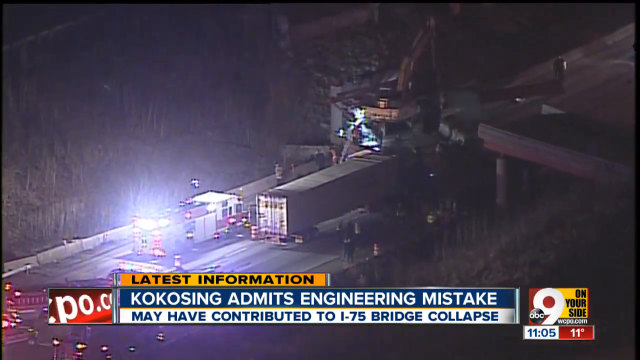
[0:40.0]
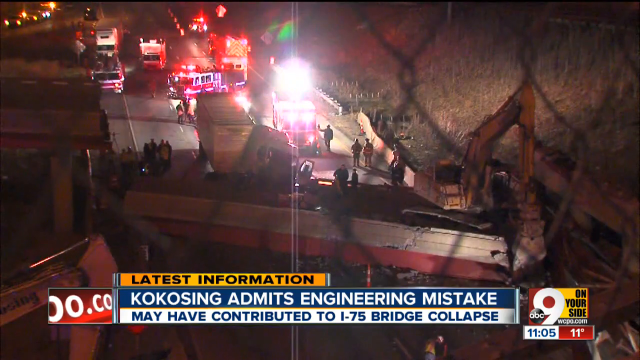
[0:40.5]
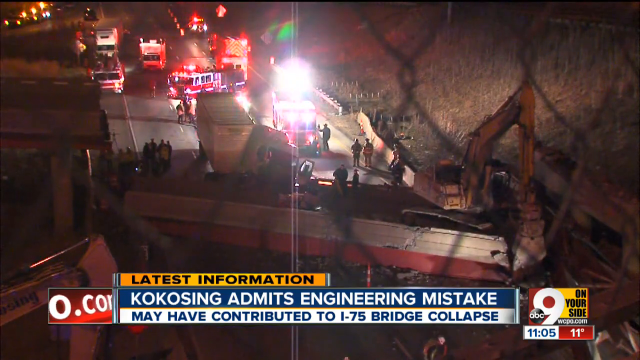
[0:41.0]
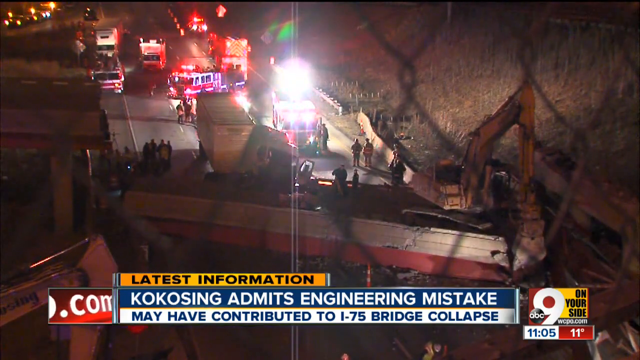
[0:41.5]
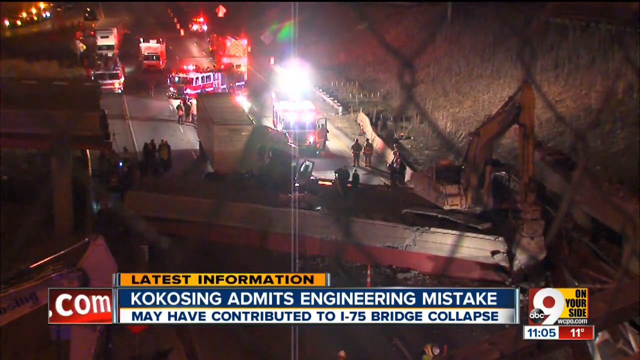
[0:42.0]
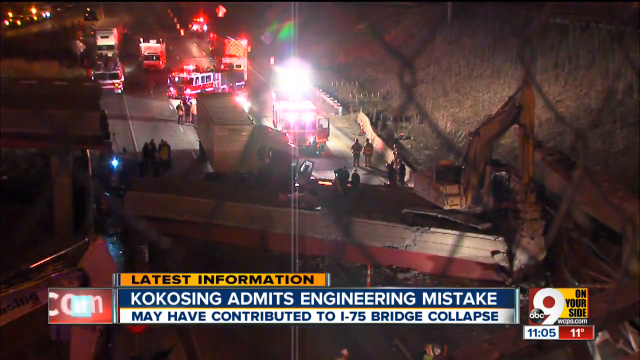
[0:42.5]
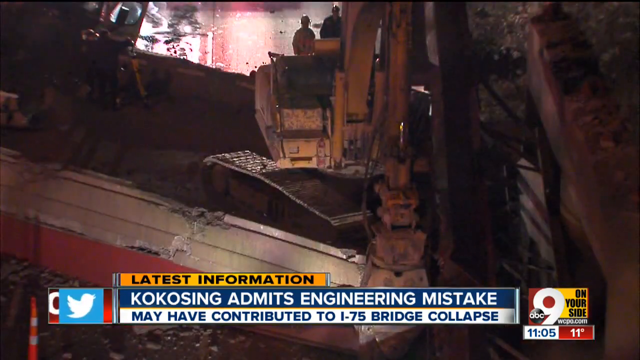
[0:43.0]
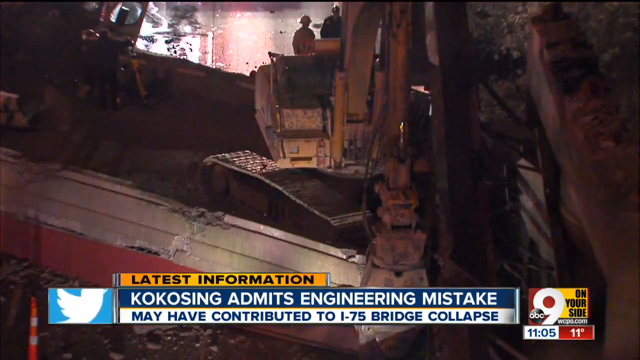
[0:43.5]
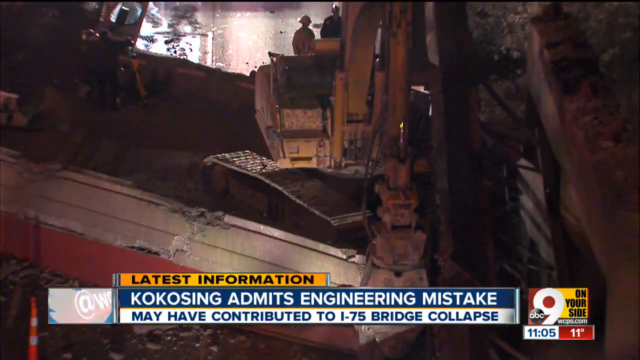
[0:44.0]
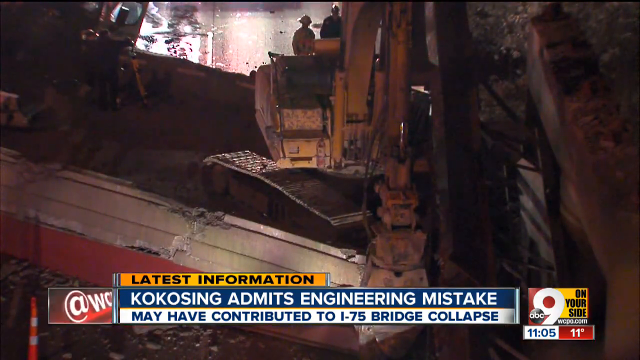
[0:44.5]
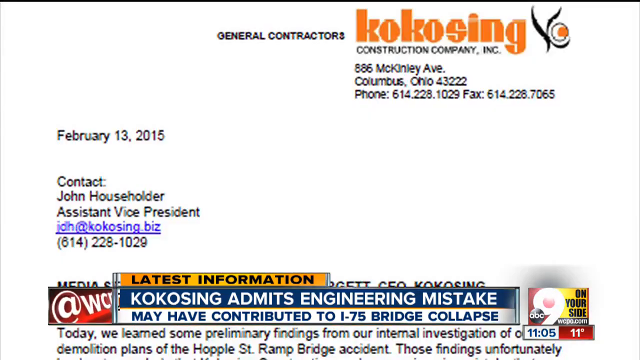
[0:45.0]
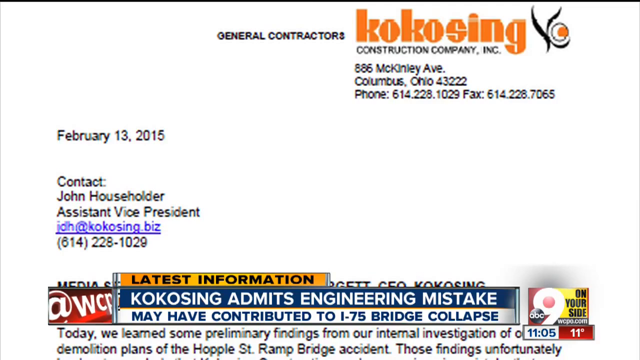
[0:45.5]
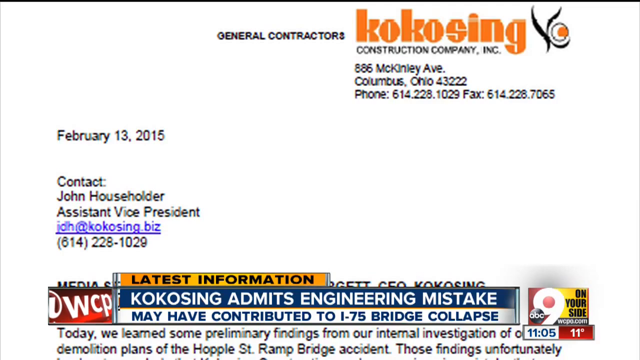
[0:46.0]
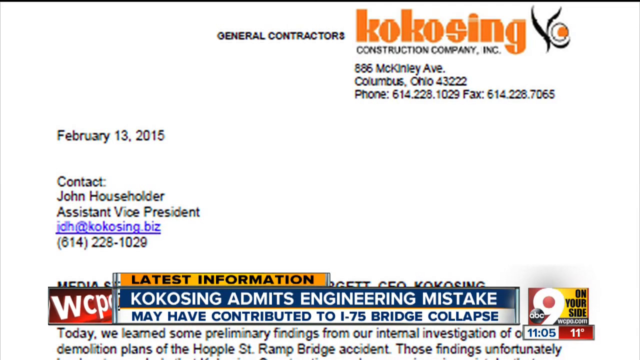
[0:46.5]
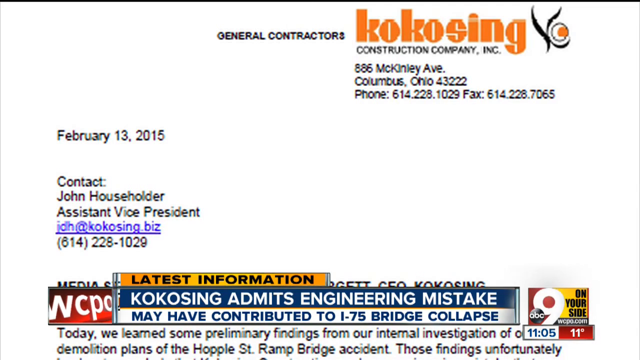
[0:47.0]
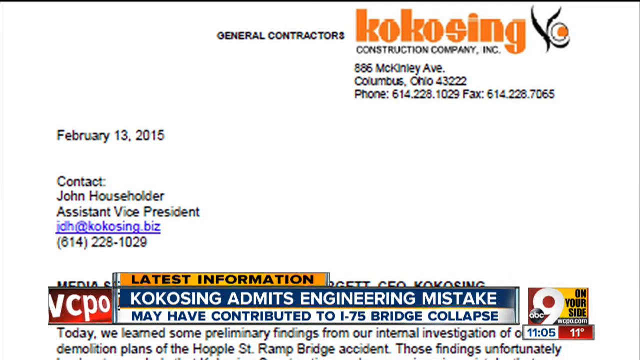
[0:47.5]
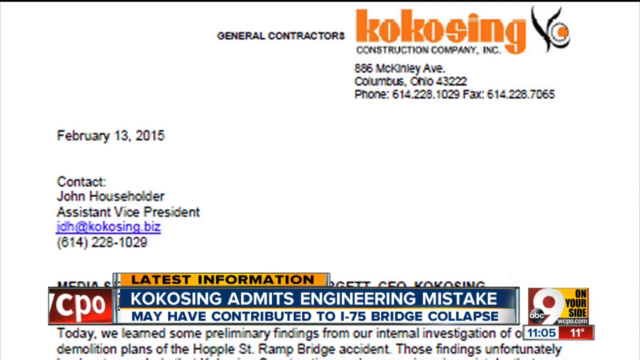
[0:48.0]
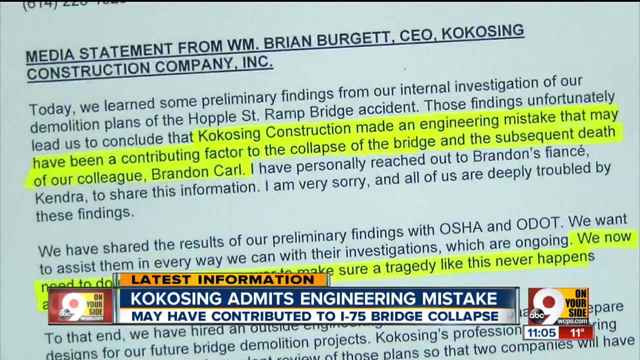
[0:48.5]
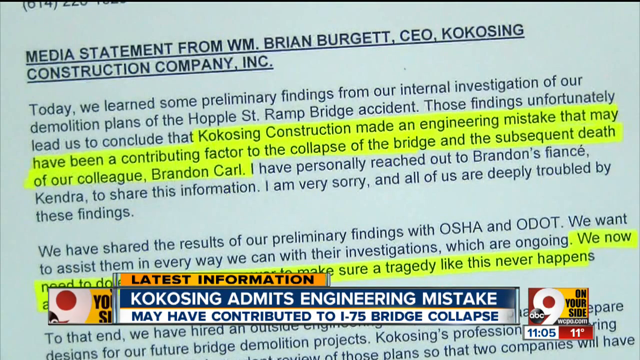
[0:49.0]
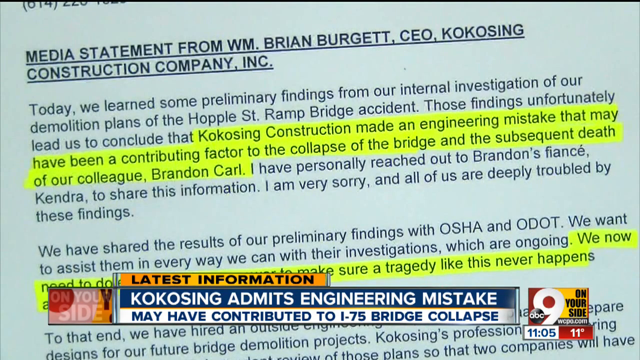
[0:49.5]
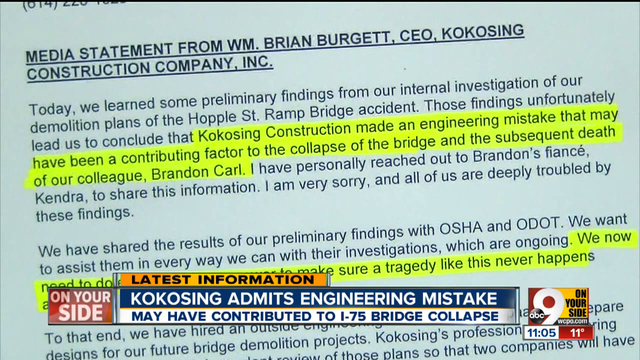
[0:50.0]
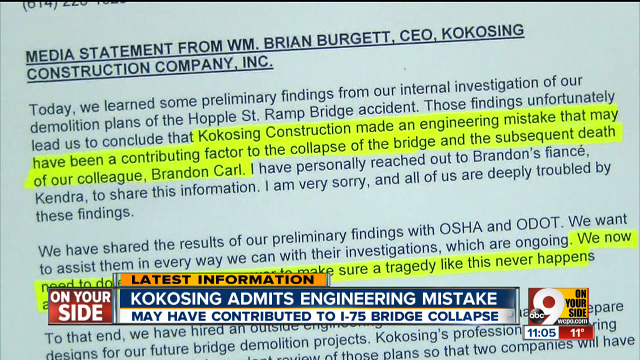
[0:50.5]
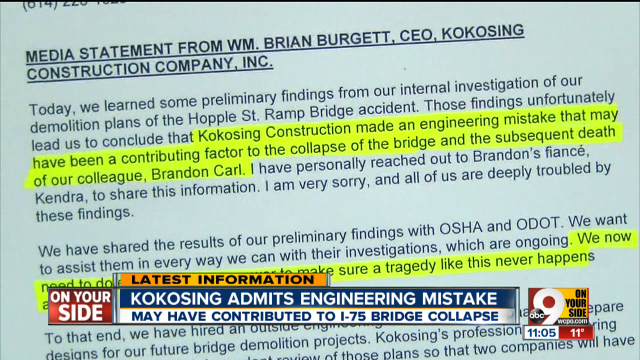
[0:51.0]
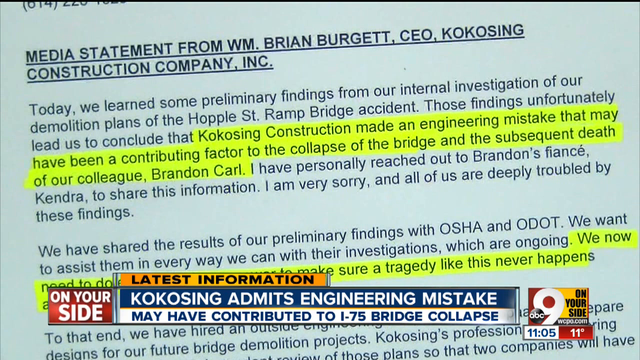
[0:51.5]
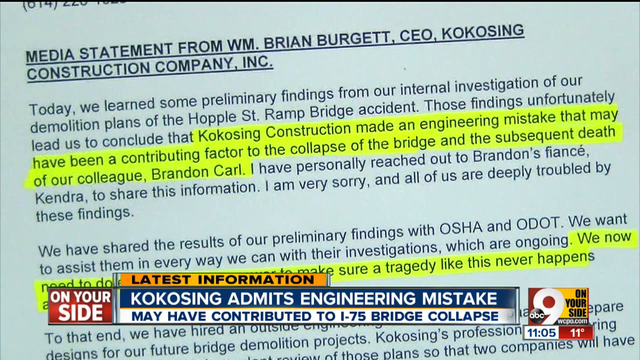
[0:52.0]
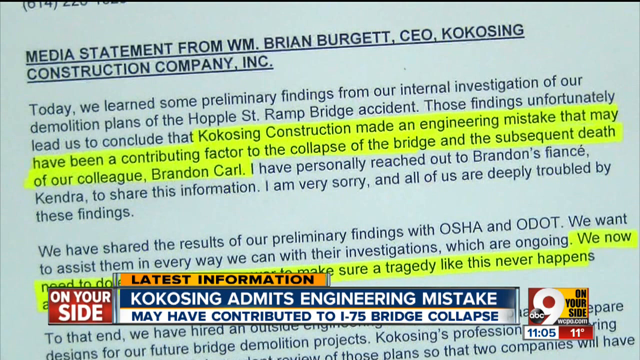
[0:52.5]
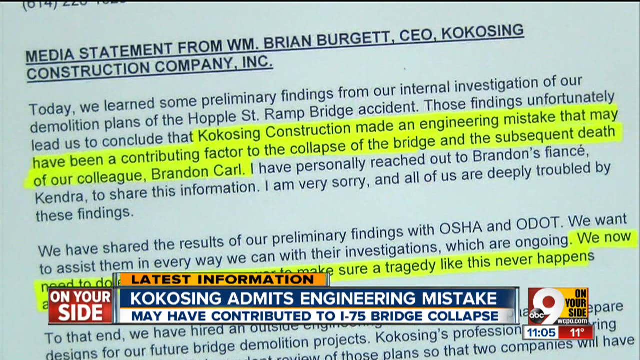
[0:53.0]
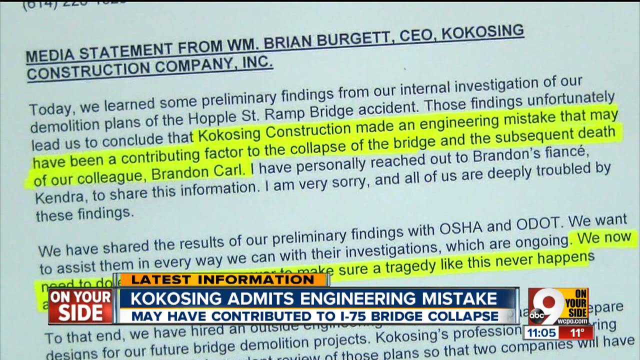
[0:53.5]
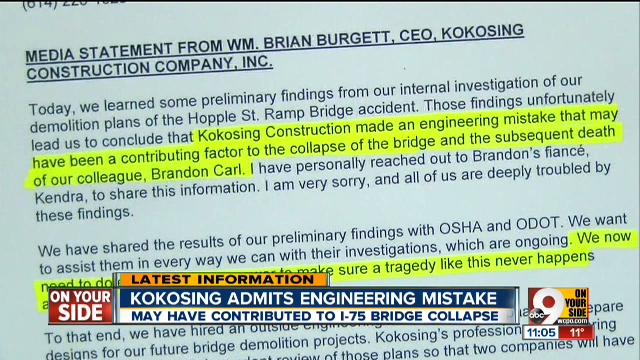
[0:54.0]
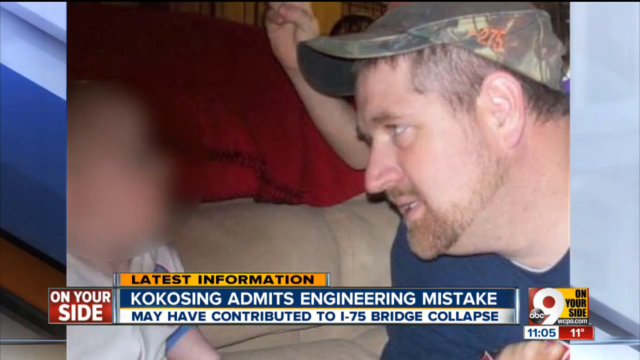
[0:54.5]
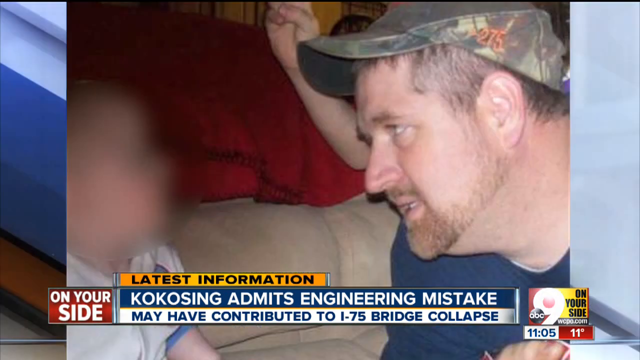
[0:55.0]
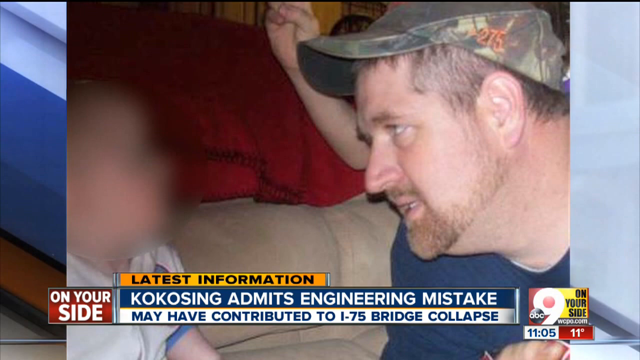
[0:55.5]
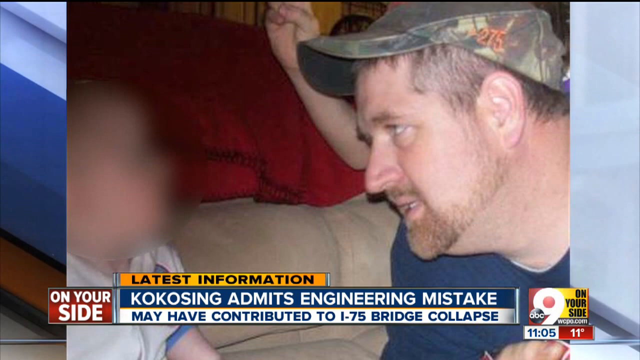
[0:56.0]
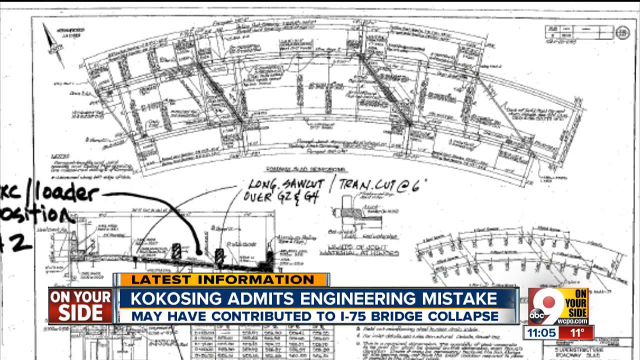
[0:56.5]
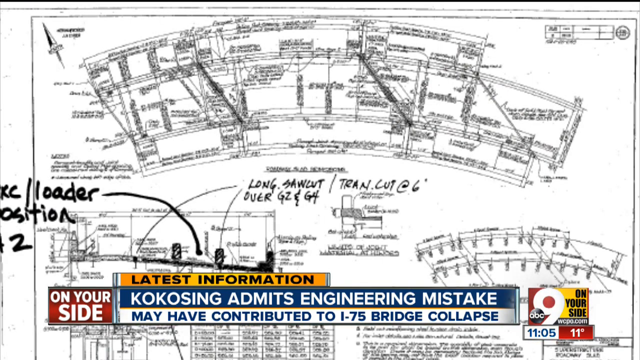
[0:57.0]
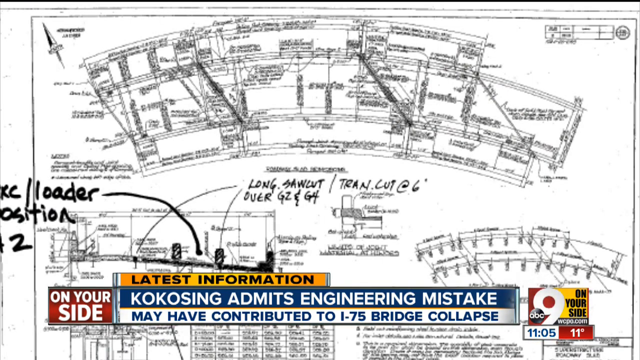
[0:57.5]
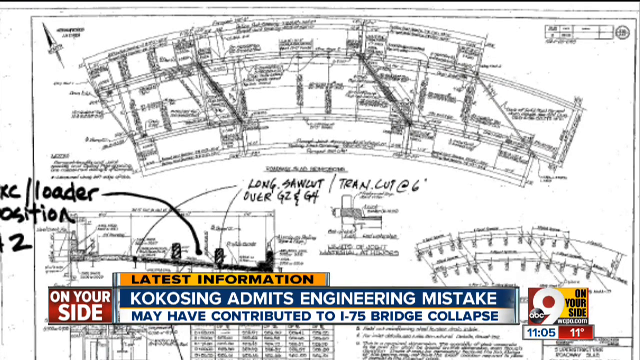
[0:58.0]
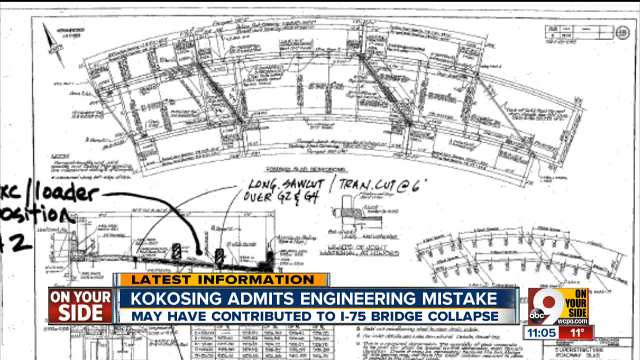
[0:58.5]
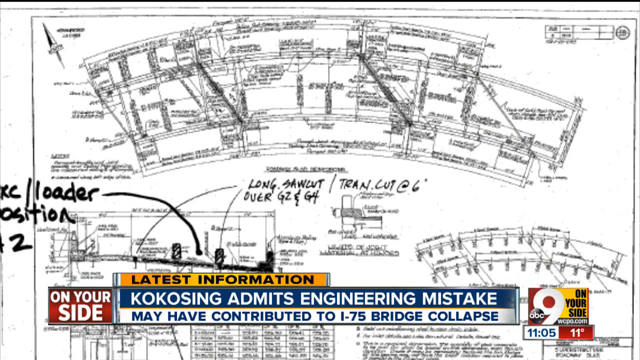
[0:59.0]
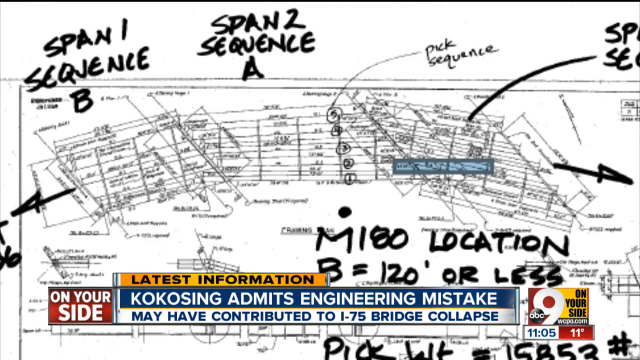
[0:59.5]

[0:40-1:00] Scenes from the accident site show where the bridge collapsed on top of an 18-wheeler. A number of firefighters are in motion, removing debris and wreckage, and they appear to be working very fervently; no police are visible. A form from the general contractors at Coco Singh is then shown, listing the construction company's address as 586 McKinley Avenue, Columbus, Ohio 43222. It is a statement given on February 13, 2015, with the contact John Householder, Assistant Vice President, JDH at CocoSingh.biz, and his phone number is listed as well. Apparently his company is responsible for the fatal collapse.